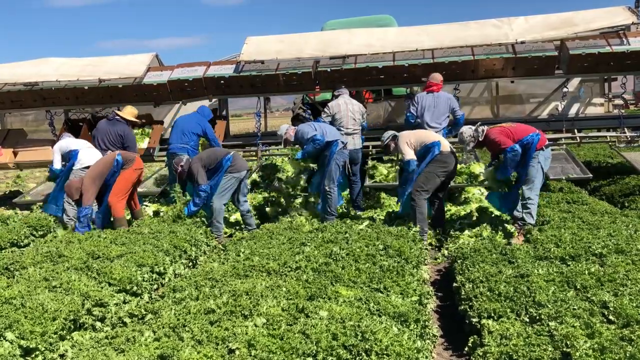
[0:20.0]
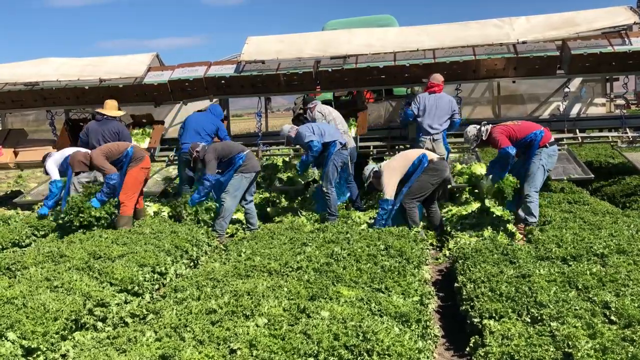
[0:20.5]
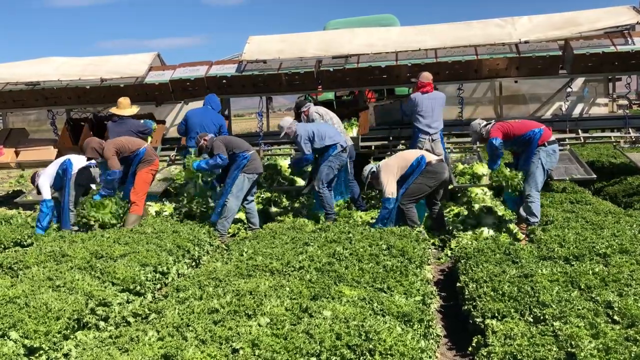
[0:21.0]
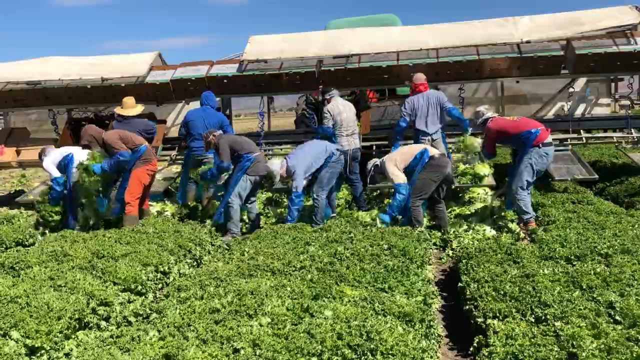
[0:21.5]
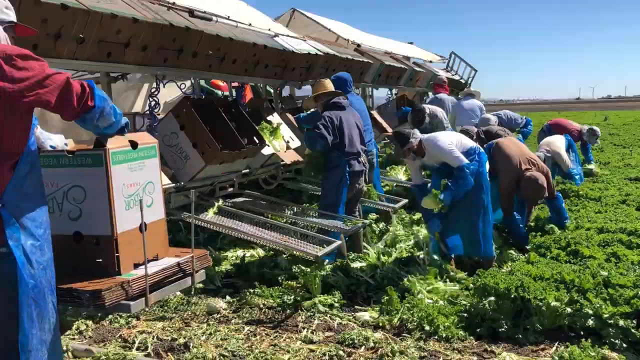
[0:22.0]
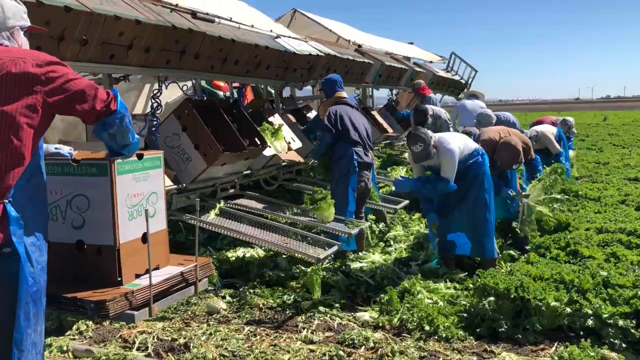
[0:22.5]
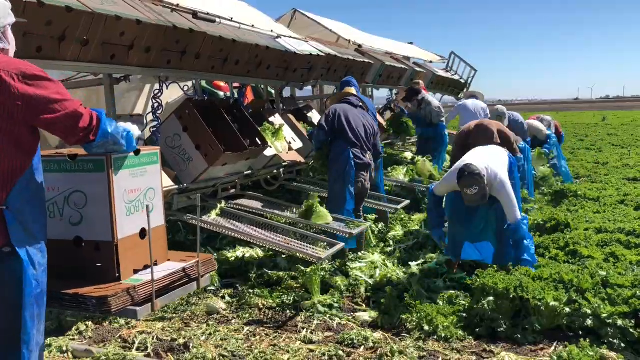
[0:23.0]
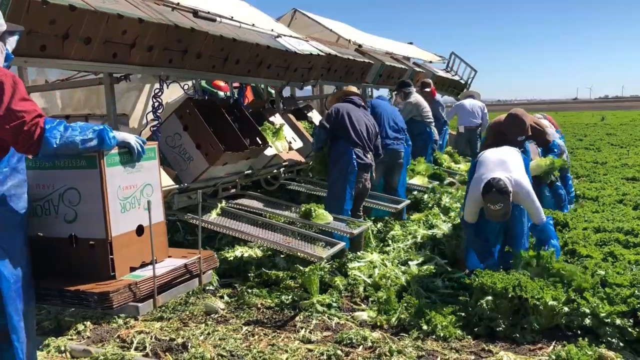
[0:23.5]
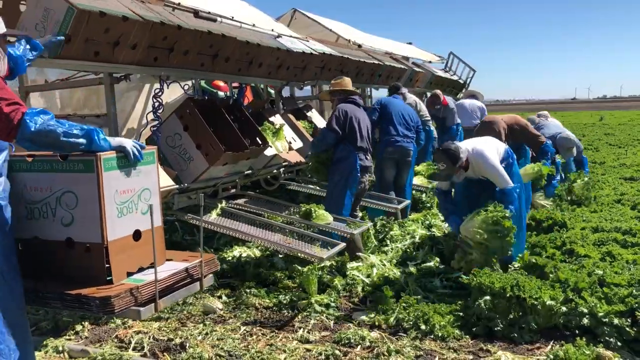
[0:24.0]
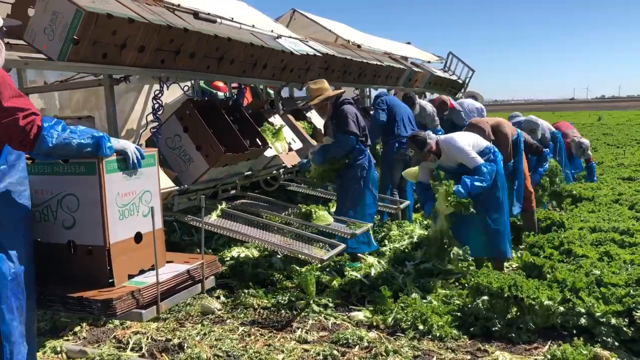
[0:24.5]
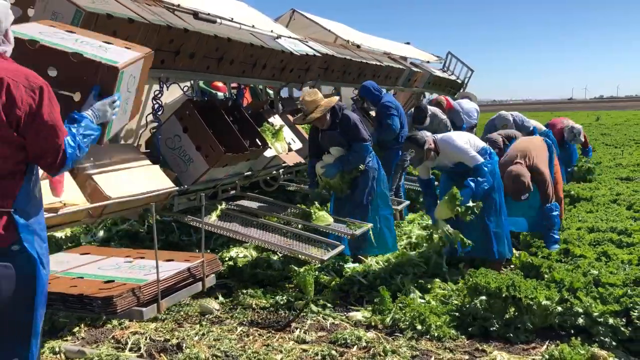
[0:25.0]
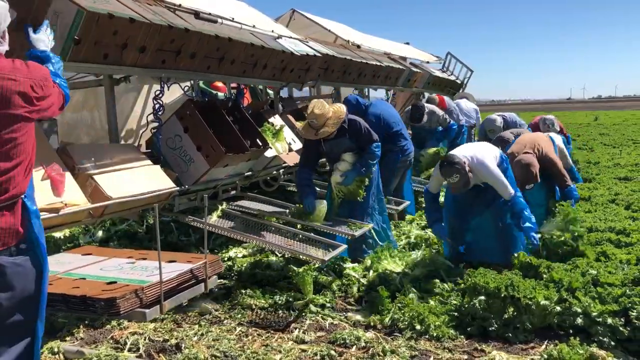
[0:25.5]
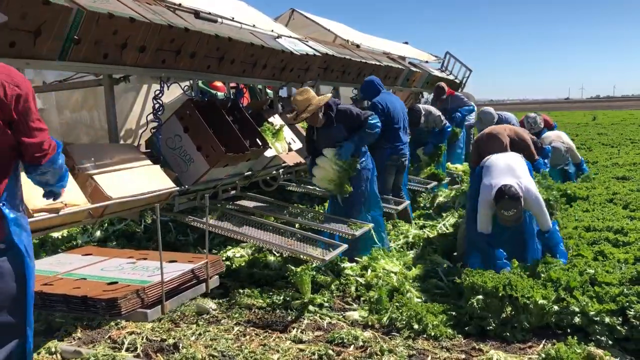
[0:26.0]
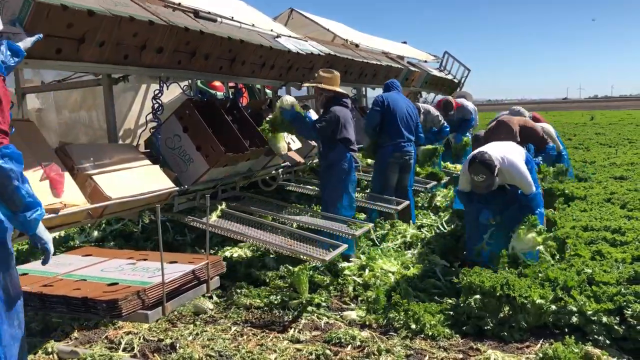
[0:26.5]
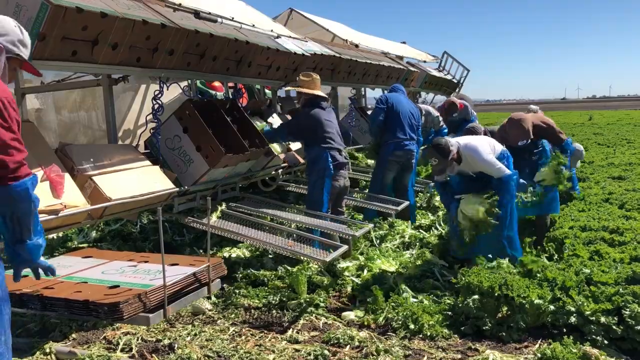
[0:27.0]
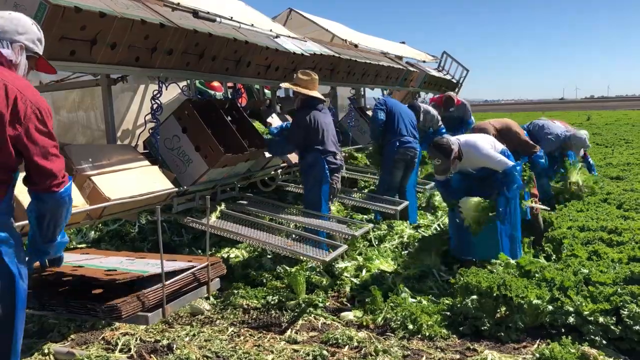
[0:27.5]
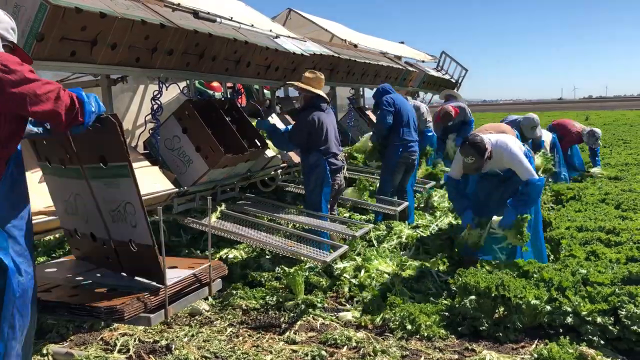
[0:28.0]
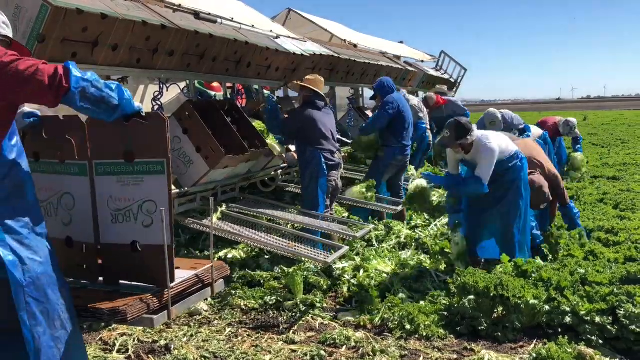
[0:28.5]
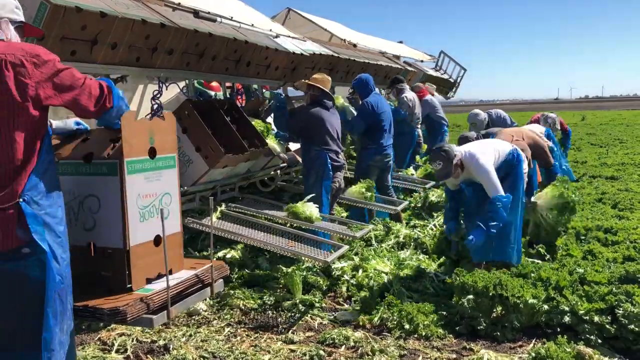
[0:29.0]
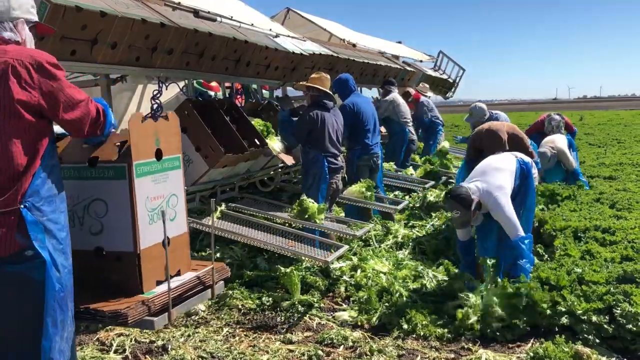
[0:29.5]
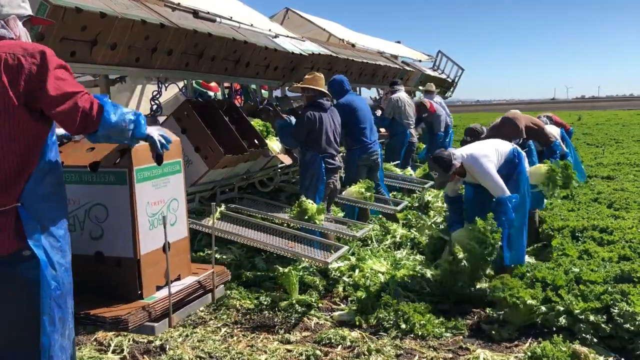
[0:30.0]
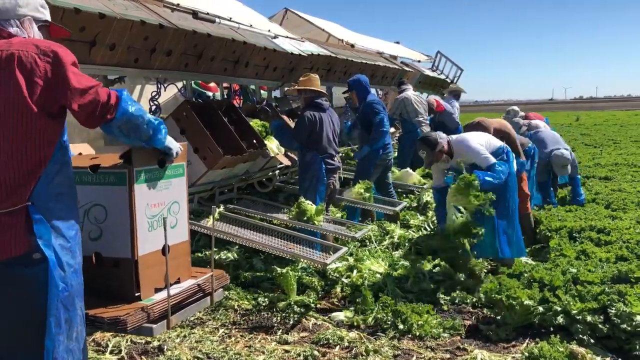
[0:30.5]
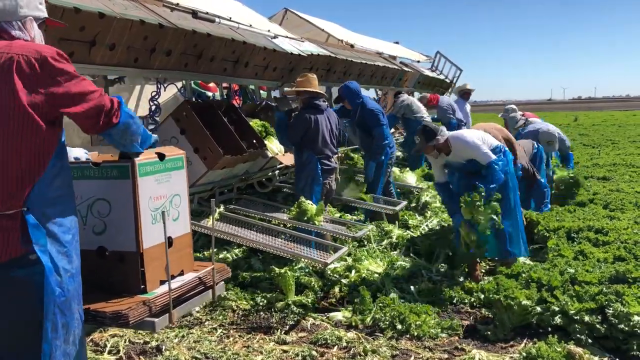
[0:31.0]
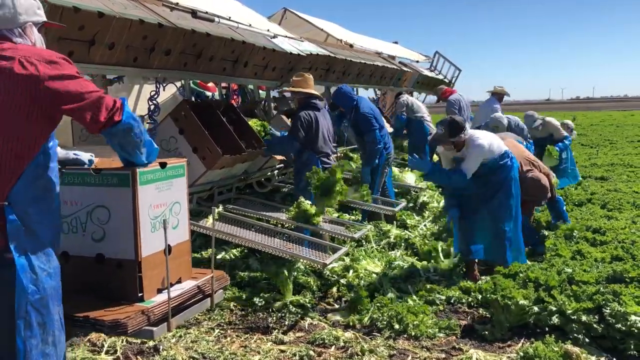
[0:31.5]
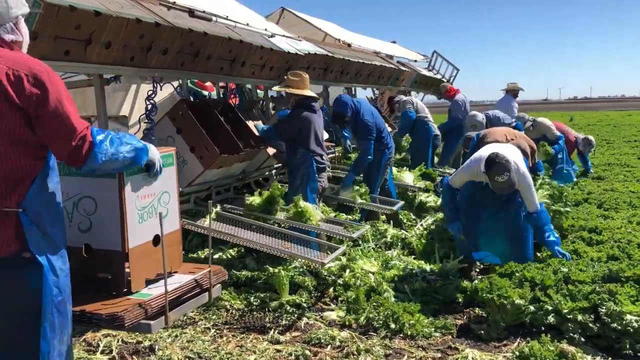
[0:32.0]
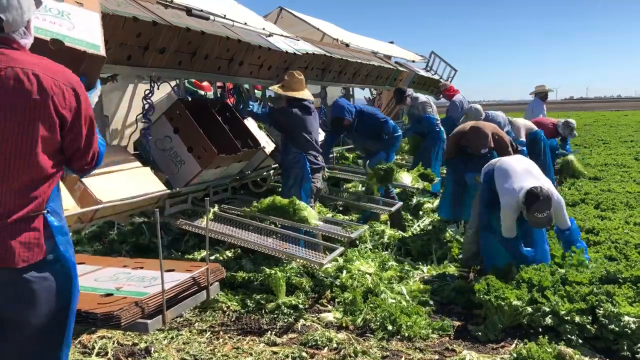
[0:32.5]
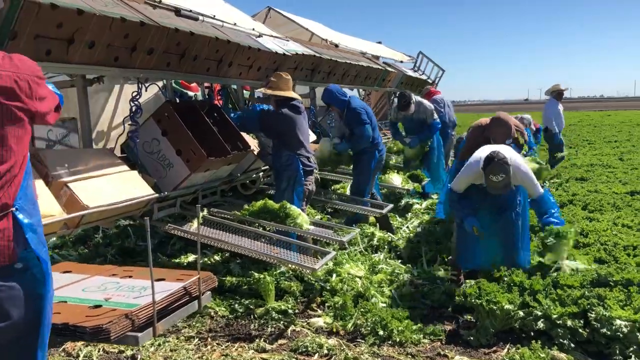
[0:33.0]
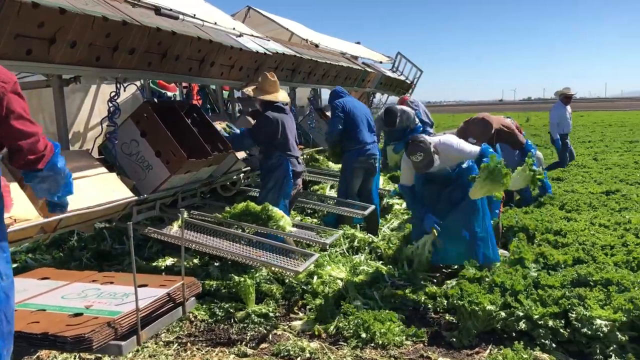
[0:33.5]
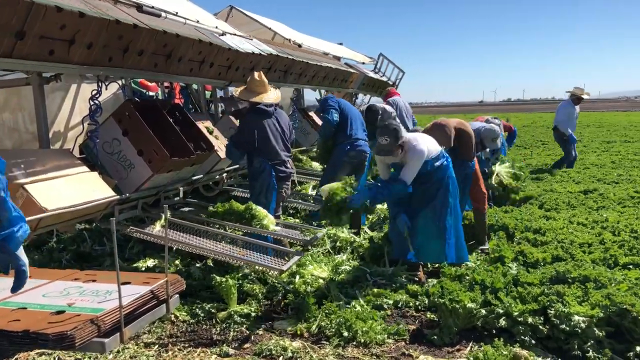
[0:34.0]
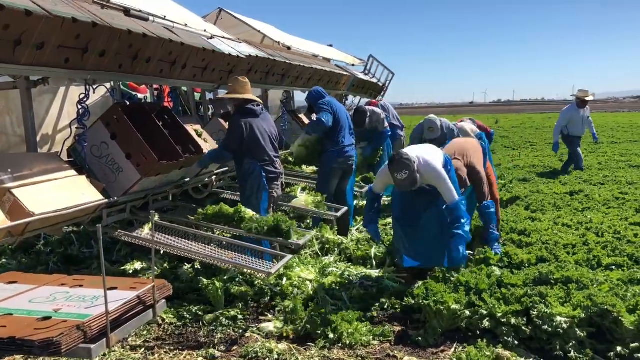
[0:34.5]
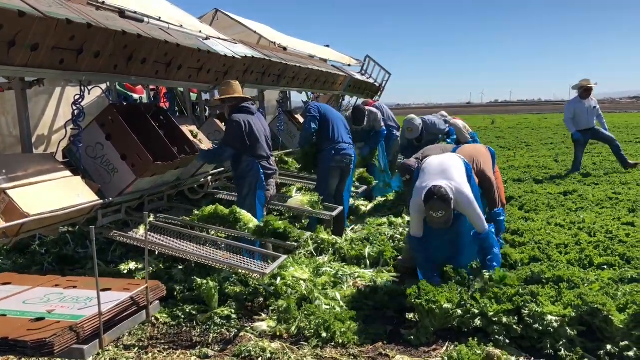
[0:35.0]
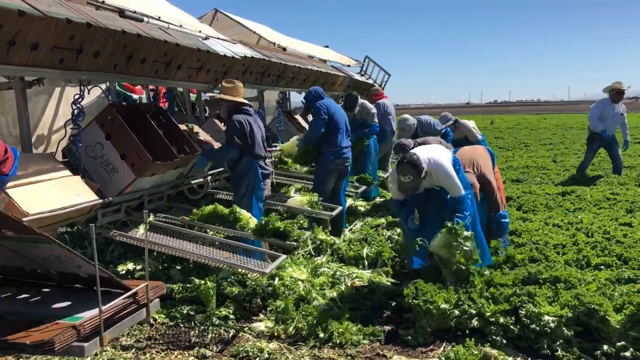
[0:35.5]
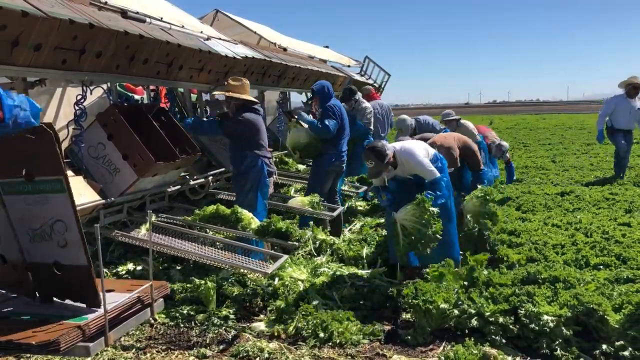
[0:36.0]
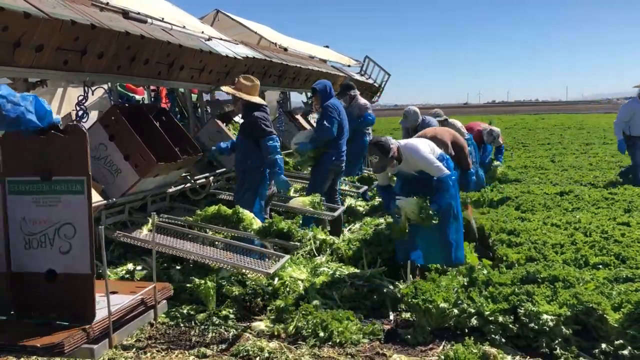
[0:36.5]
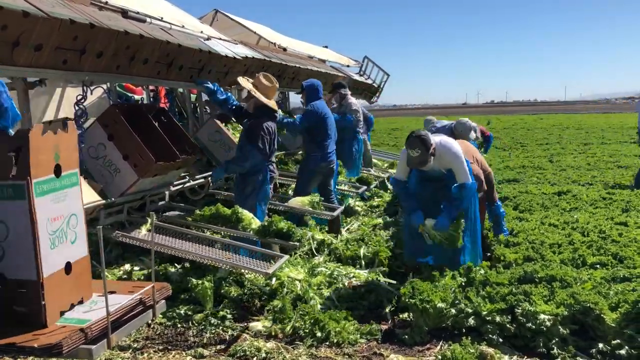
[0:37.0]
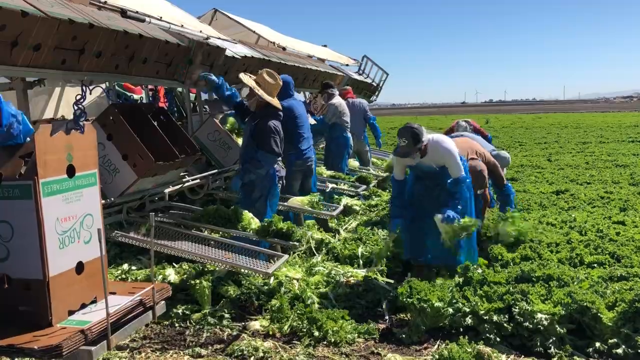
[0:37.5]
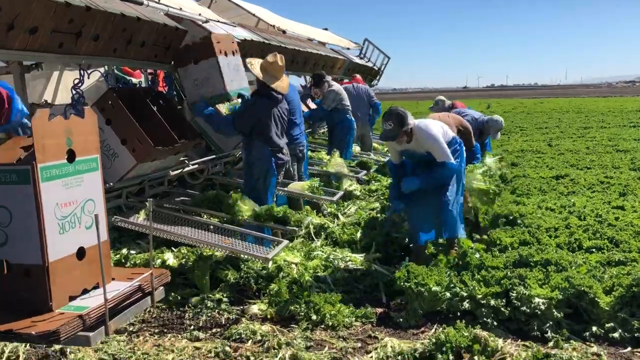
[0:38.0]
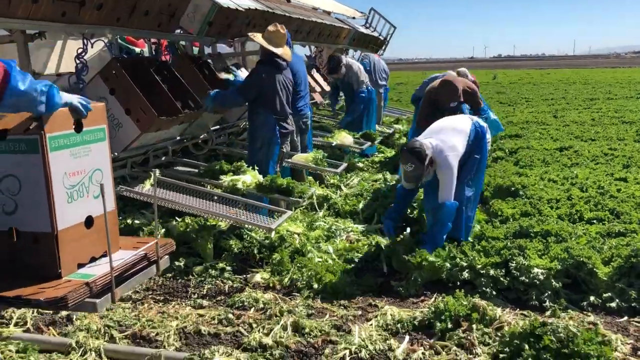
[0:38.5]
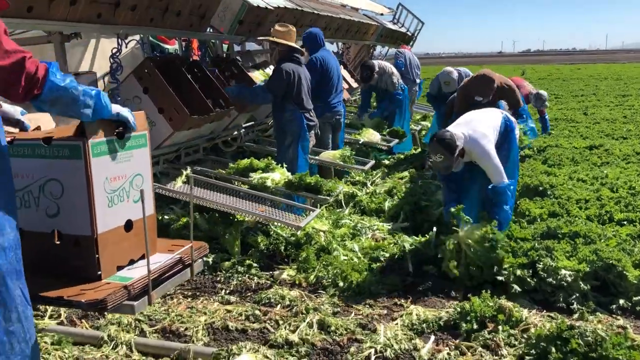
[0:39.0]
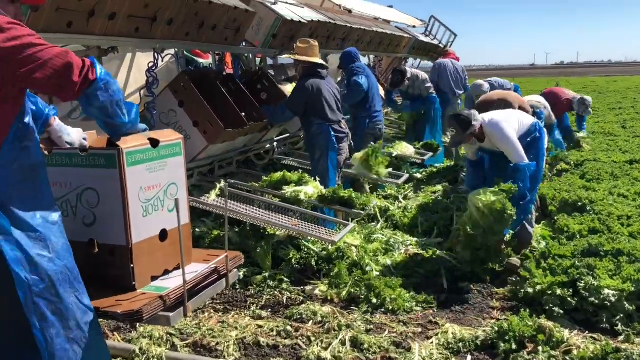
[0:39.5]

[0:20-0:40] The workers continue in the field, then the video cuts to what appears to be a different angle of the same scene, seen from the left side. The workers are in a line going off slightly to the right, and to their left is a bunch of boxes with small conveyor belts leading to them. The workers wear normal clothing such as shirts and jeans, and some wear baseball caps and other wide-brimmed hats. The structure on the left side has what appears to be a cloth roof, and wires connect the boxes to this structure. Using long knives, the workers cut at the plants and then toss them either onto the conveyor belts or into the boxes. The video shows them working for a few moments.